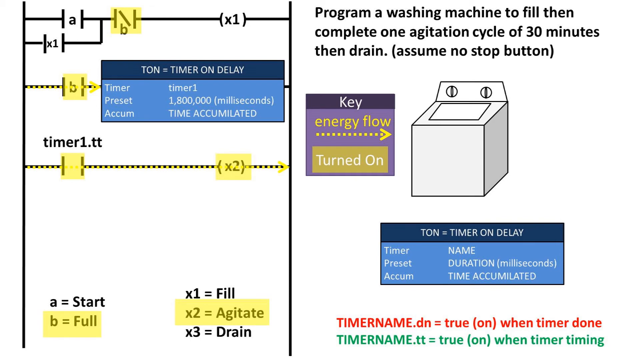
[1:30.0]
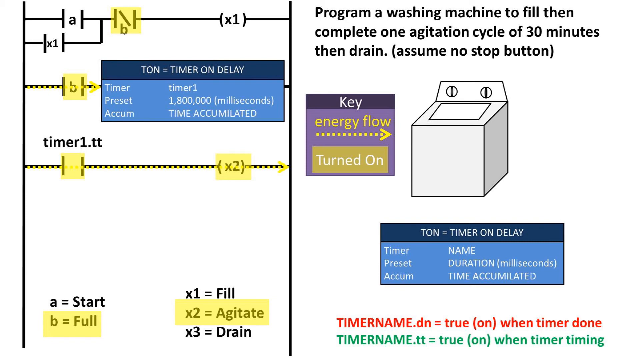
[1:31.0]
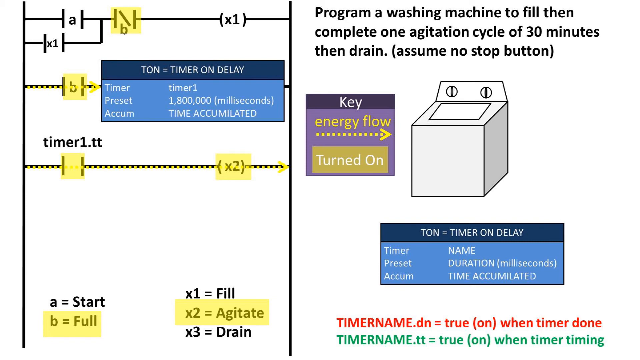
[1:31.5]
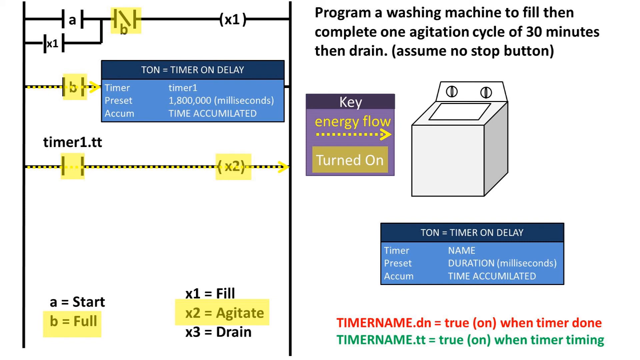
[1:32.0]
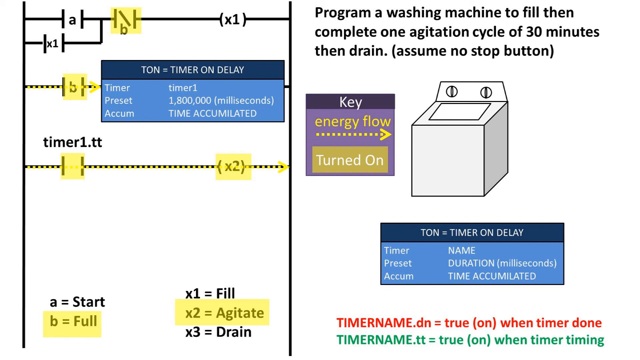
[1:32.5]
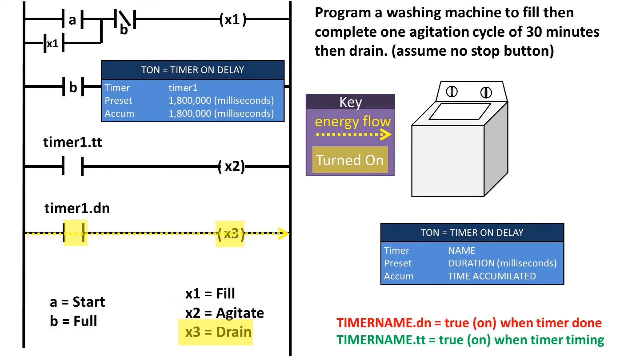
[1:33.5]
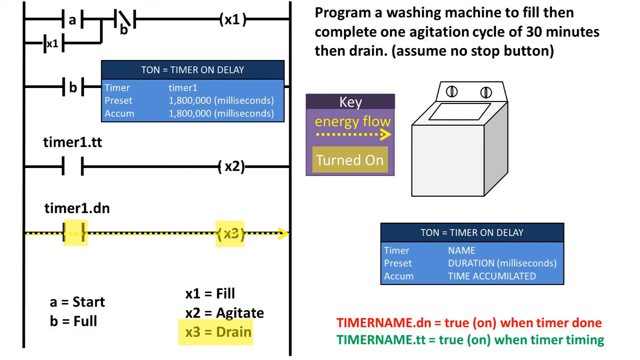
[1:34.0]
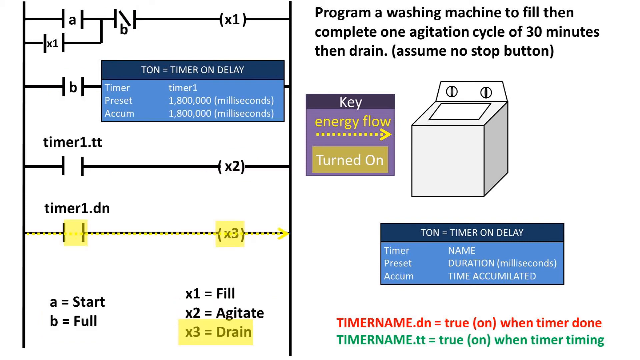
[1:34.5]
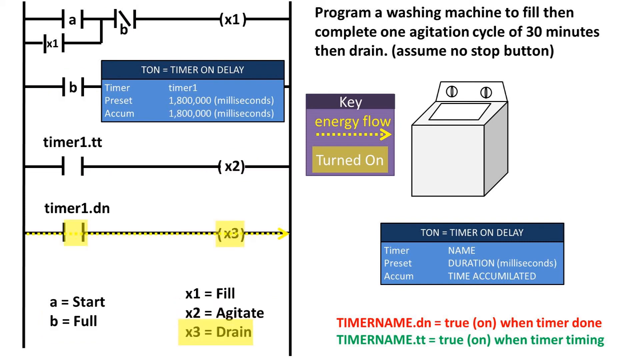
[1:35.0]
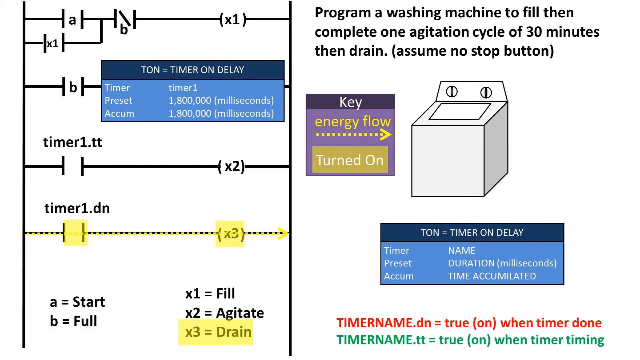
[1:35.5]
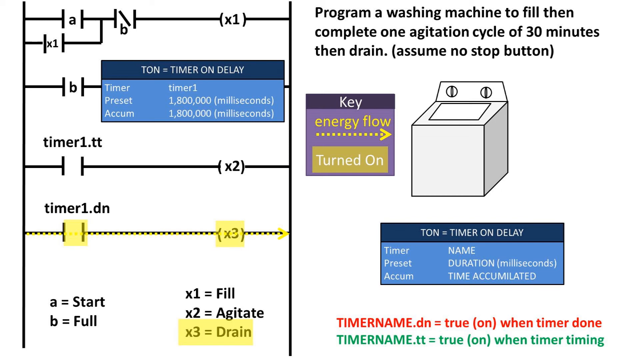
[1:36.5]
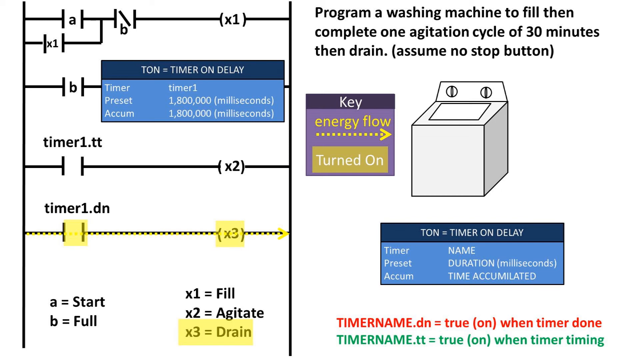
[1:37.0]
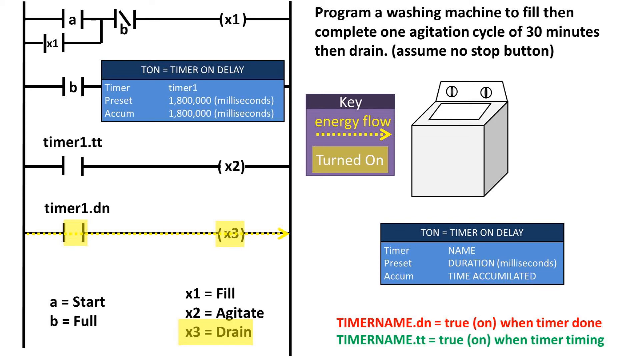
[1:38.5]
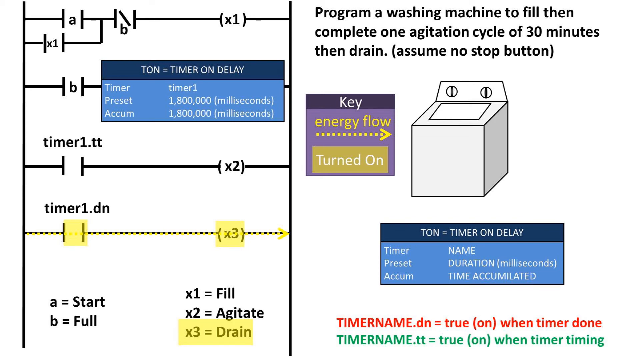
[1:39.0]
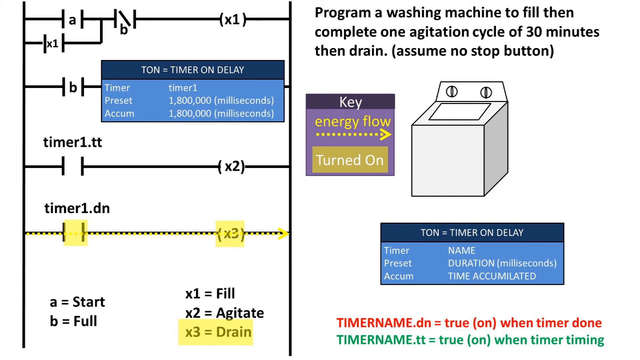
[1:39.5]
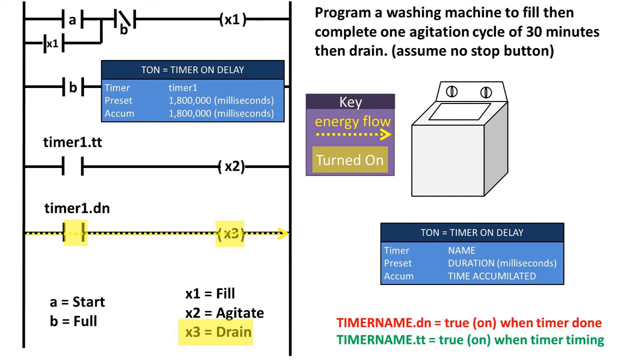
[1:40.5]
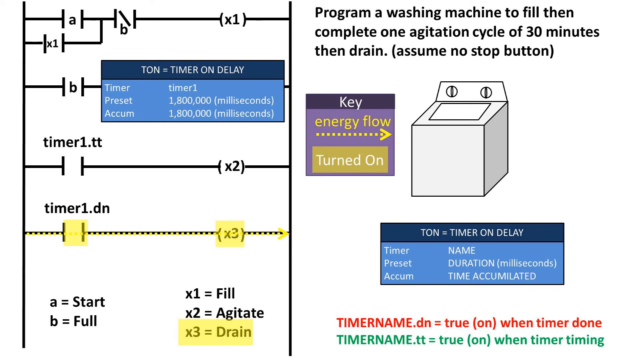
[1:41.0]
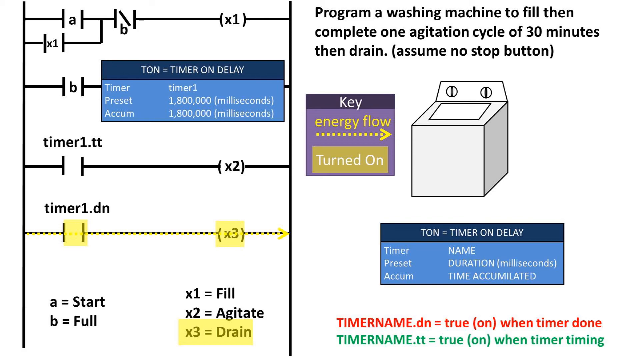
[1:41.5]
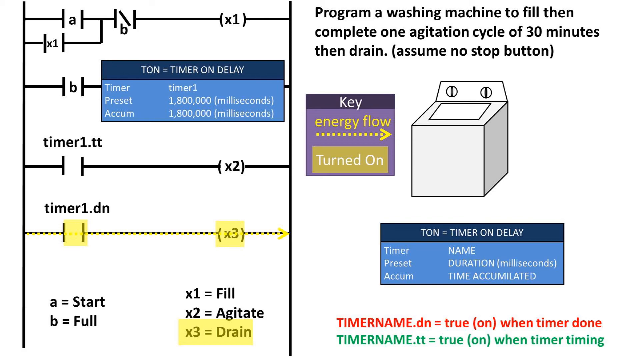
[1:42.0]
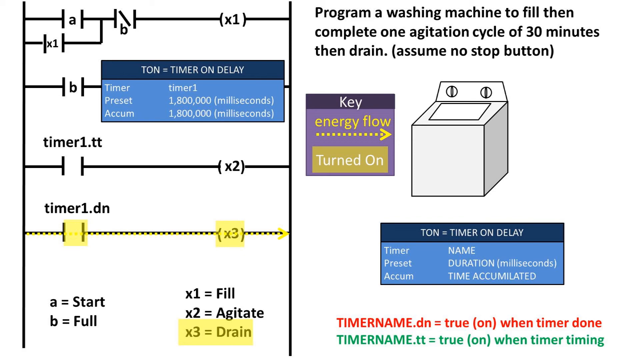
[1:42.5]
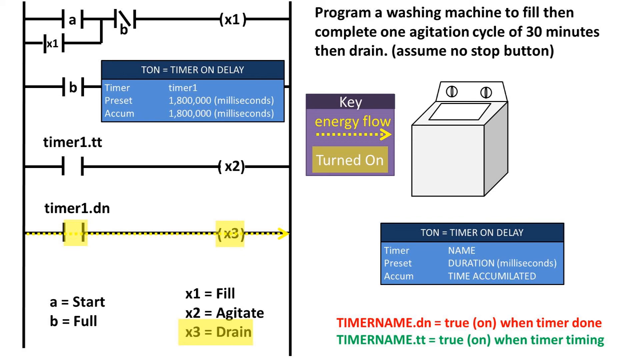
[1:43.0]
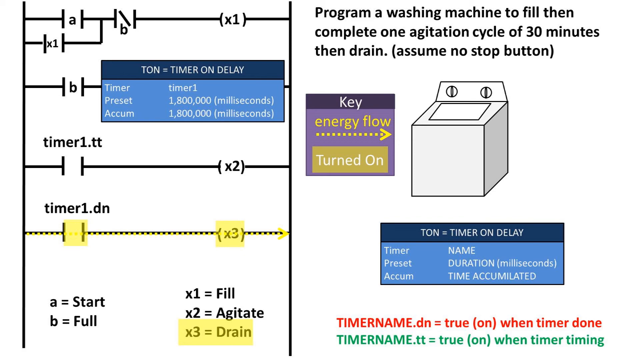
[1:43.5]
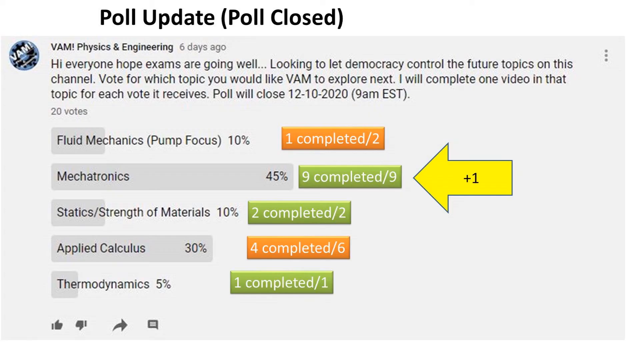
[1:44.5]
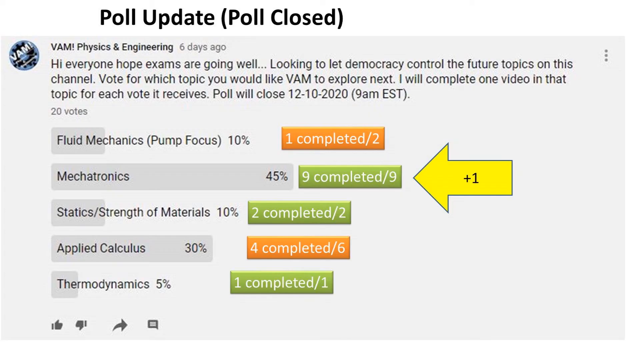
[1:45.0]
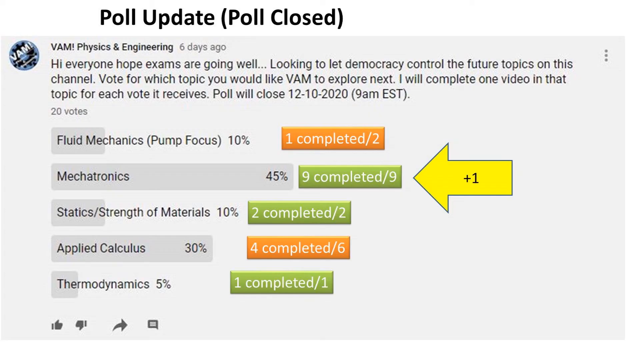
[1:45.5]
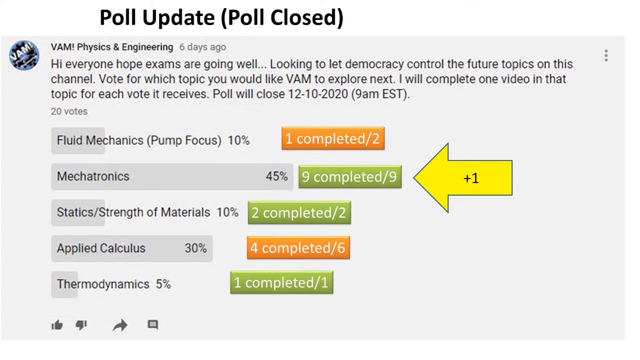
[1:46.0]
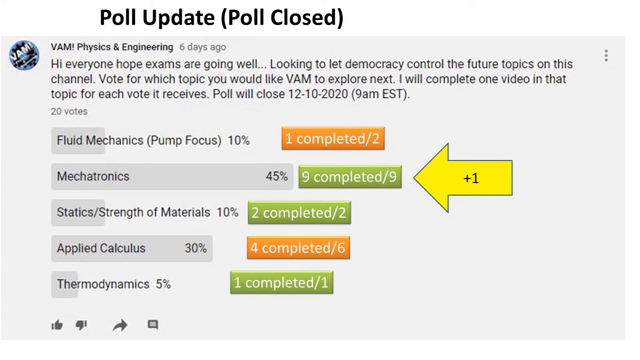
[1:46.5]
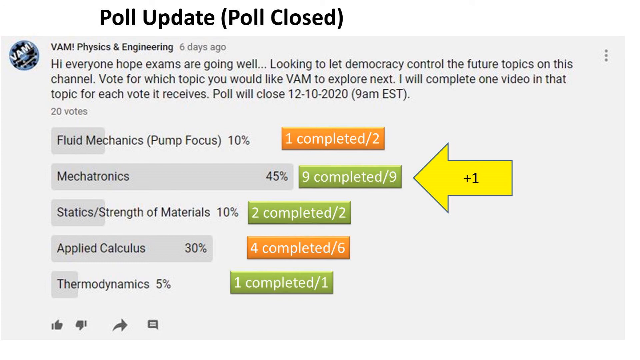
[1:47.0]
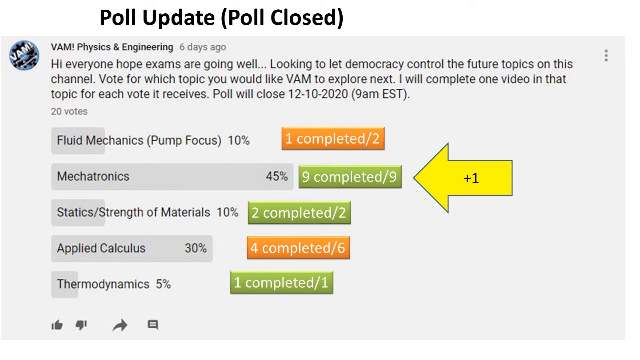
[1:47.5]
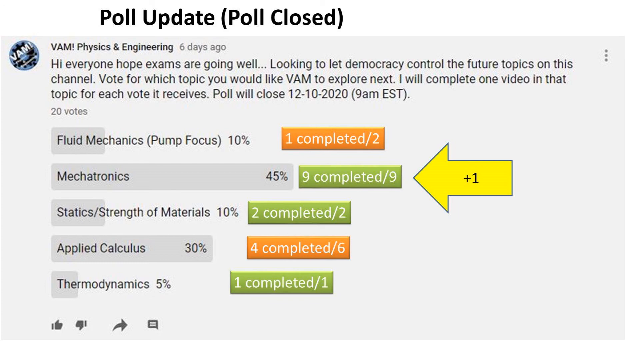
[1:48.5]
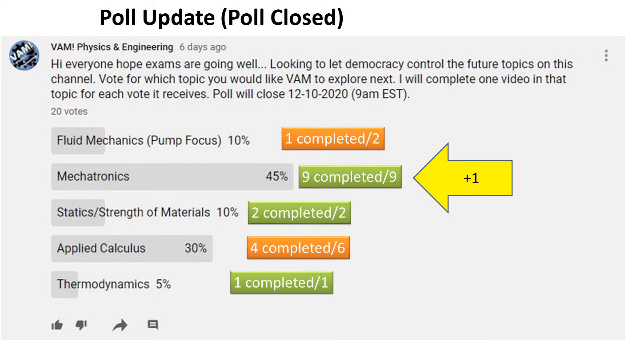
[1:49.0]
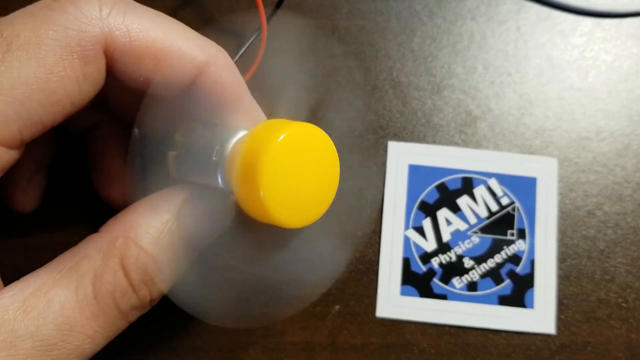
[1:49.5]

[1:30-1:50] On the left, more electrical circuits are drawn, represented with lines that have the letter B. The same timer on delay table appears, now superimposed on the circuit with the letter B, with changed values: timer is "timer1", the preset is 1,800,000 milliseconds, and the accumulated time is also 1,800,000 milliseconds. Two more circuits appear, one called "timer1.tt" and the other "timer1.dn". The timer1.dn line is dotted and has X3 in parentheses almost at the end of the circuit, while the timer1.tt line is complete and has X2 in parentheses almost at the end of what seems to be the circuit. The video then goes to another page with graphs showing different percentages for things like fluid mechanics, mechatronics, statics, strength of materials and thermodynamics, among others. Mechatronics is the bar with the highest percentage, at 45%.